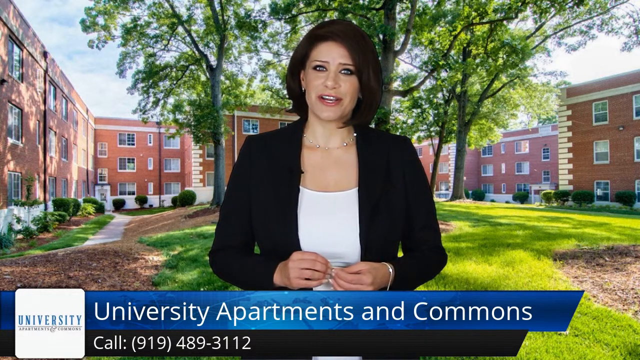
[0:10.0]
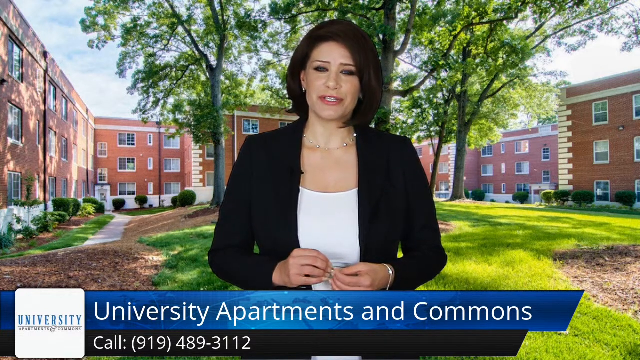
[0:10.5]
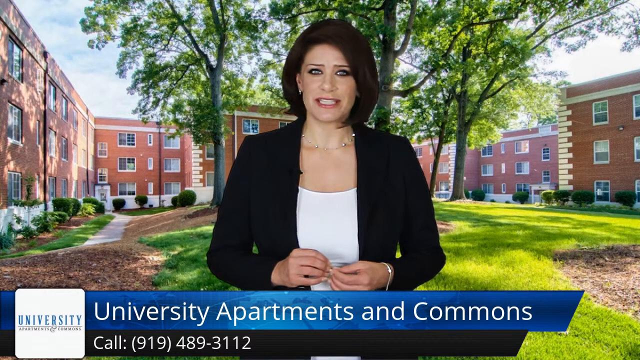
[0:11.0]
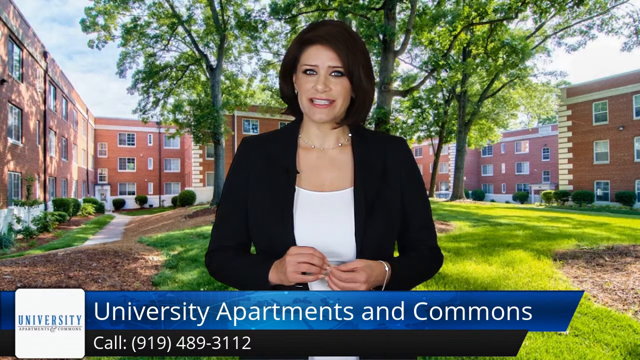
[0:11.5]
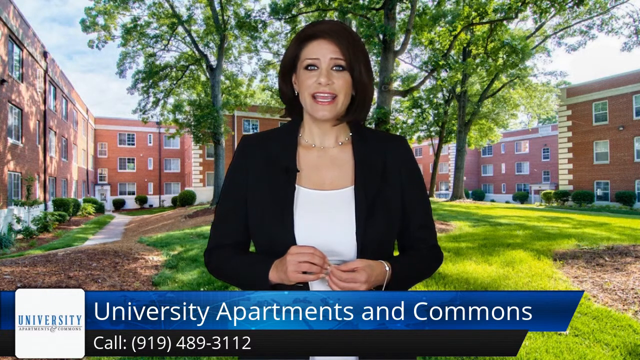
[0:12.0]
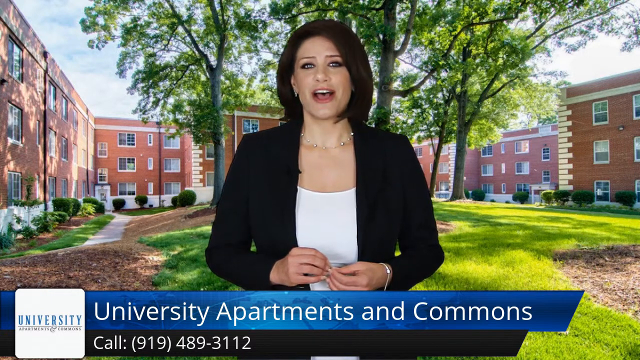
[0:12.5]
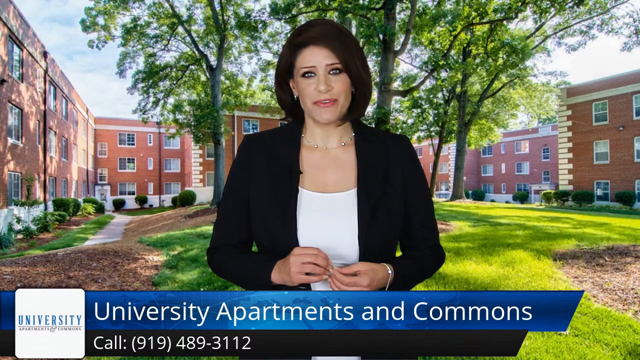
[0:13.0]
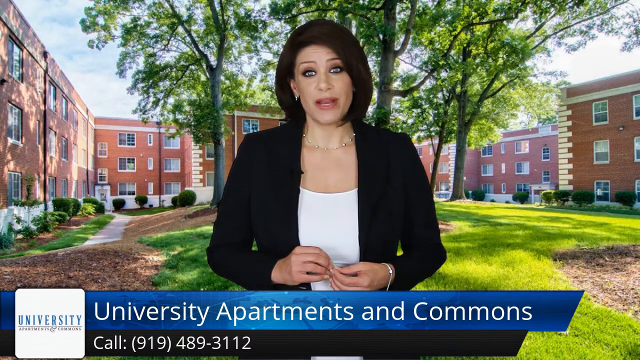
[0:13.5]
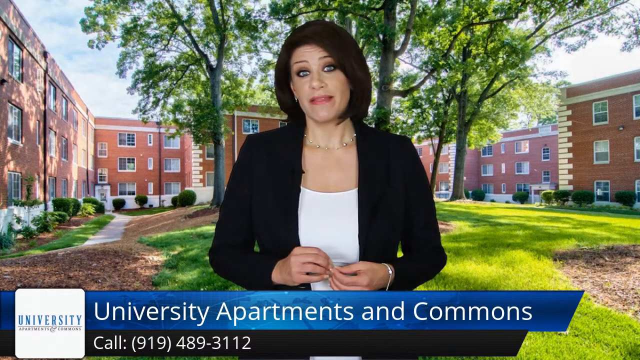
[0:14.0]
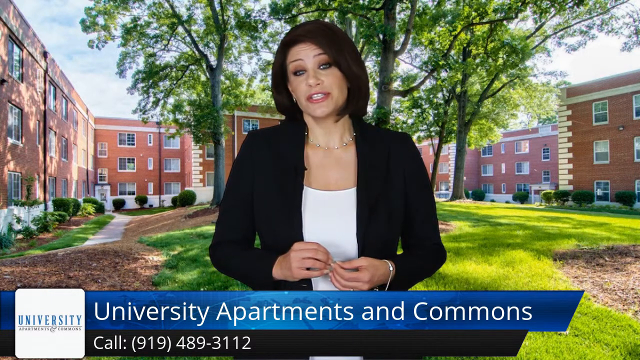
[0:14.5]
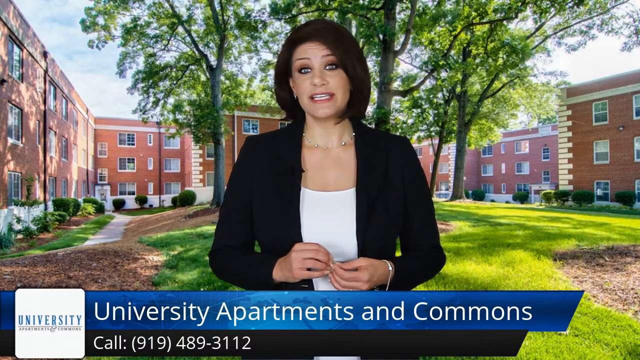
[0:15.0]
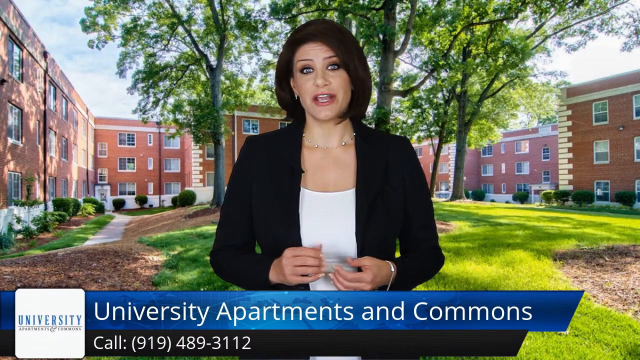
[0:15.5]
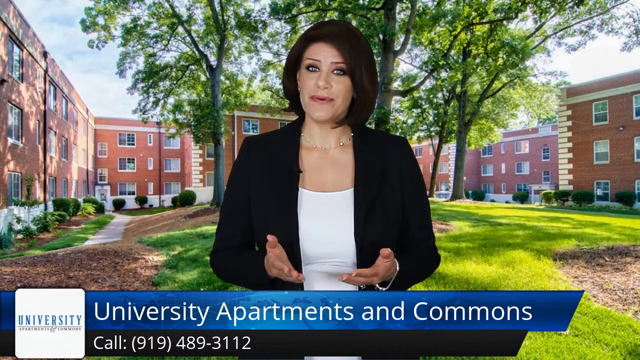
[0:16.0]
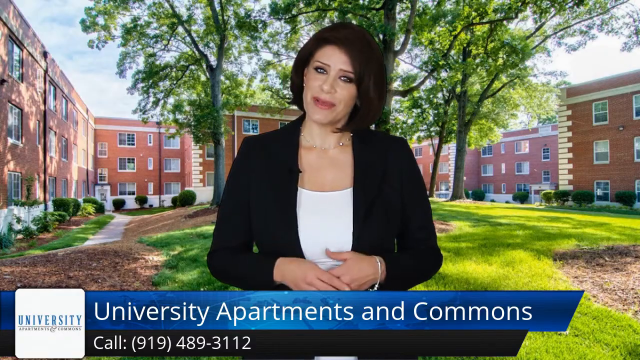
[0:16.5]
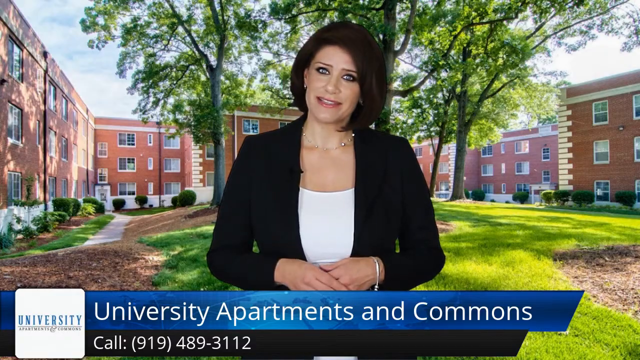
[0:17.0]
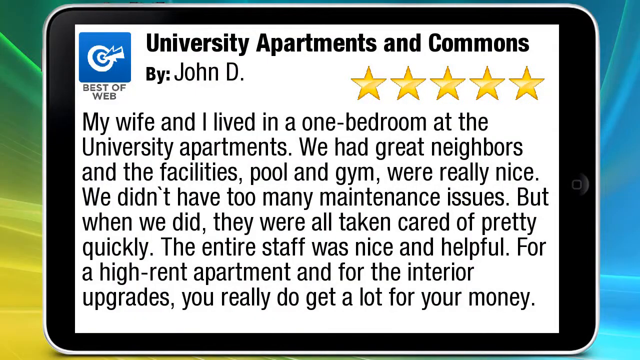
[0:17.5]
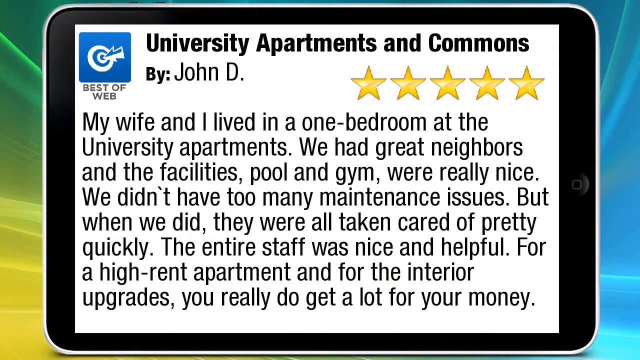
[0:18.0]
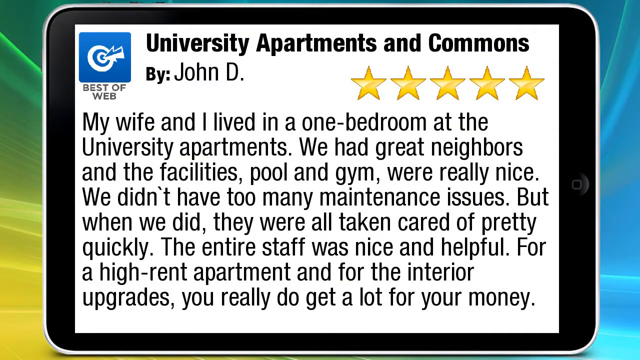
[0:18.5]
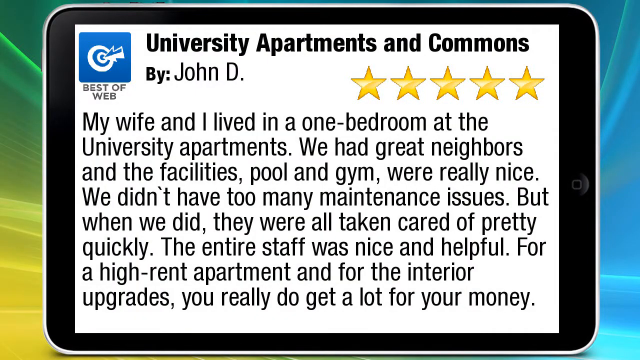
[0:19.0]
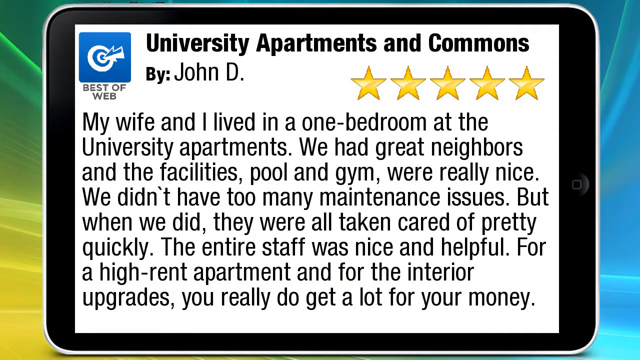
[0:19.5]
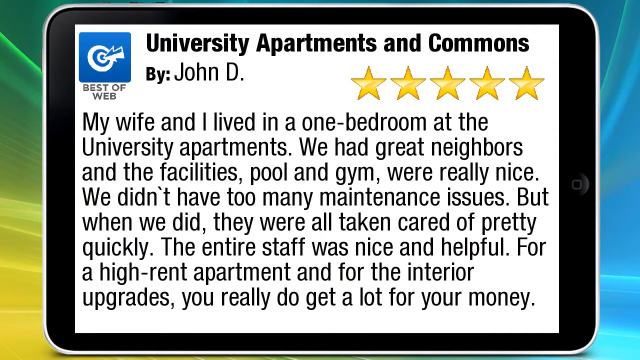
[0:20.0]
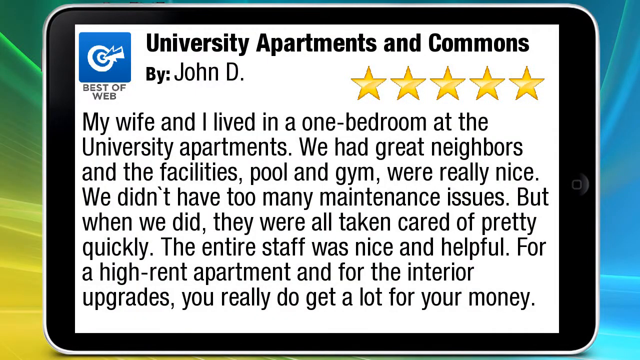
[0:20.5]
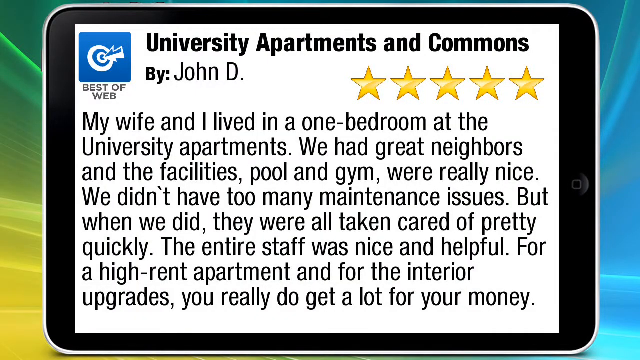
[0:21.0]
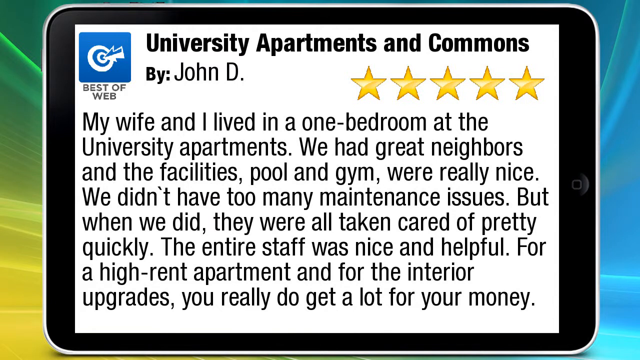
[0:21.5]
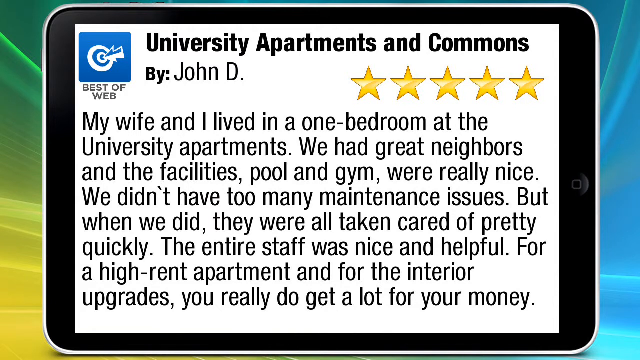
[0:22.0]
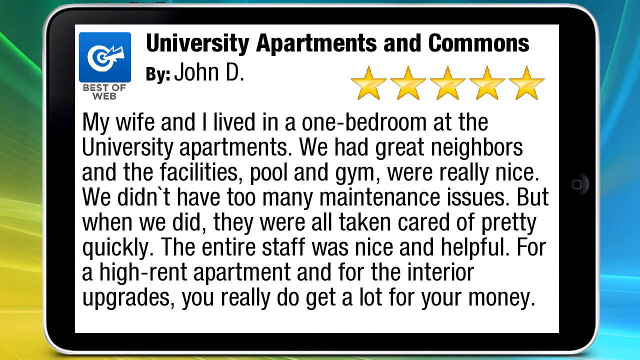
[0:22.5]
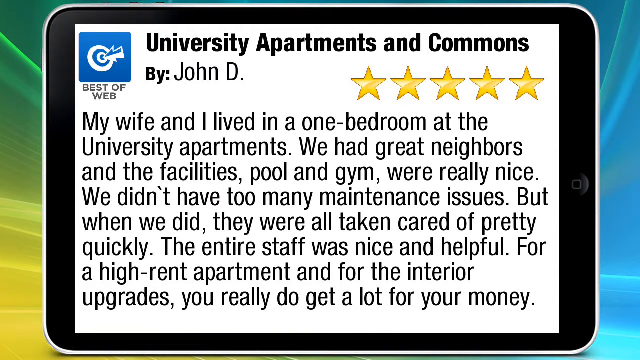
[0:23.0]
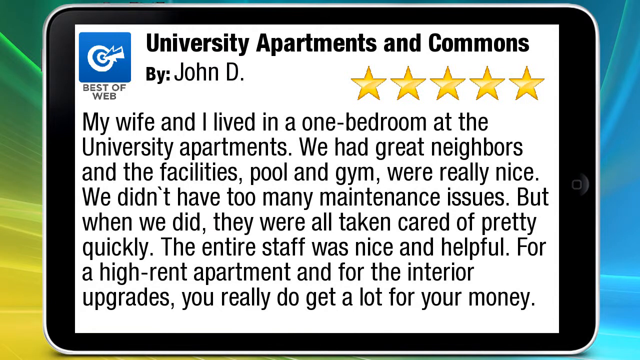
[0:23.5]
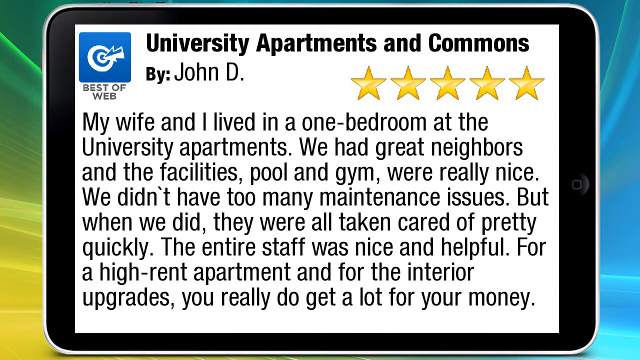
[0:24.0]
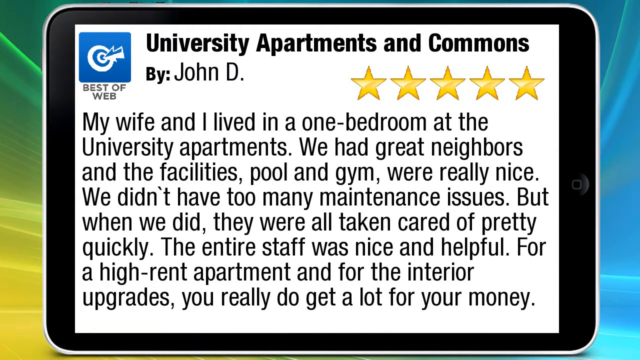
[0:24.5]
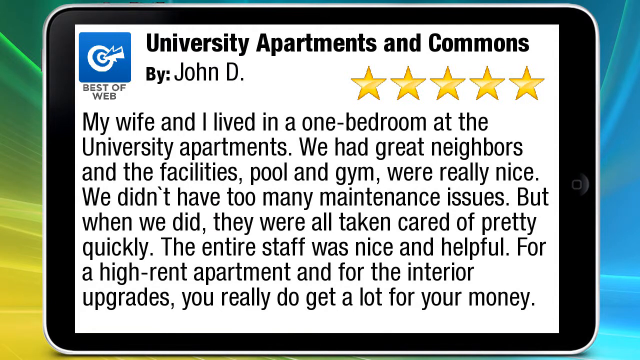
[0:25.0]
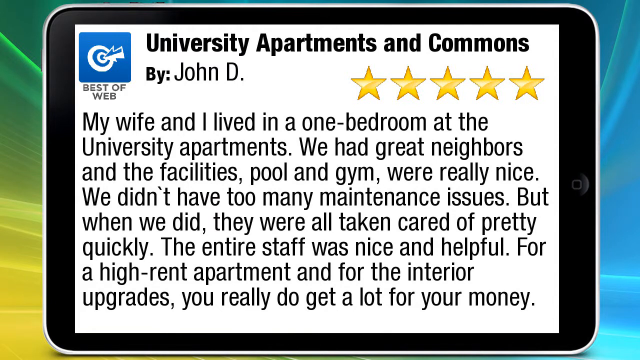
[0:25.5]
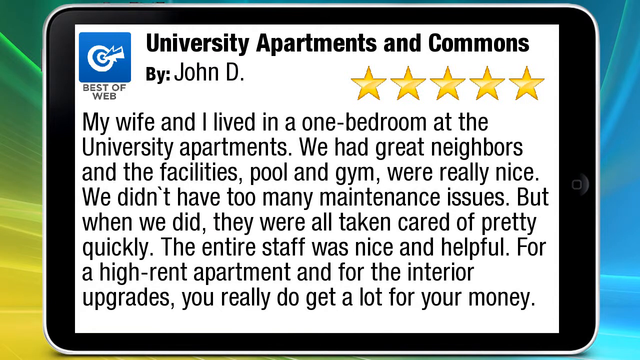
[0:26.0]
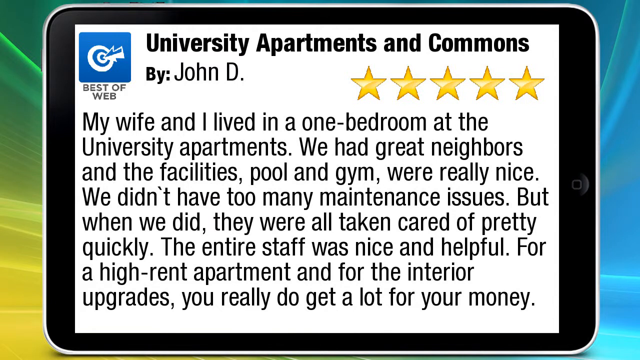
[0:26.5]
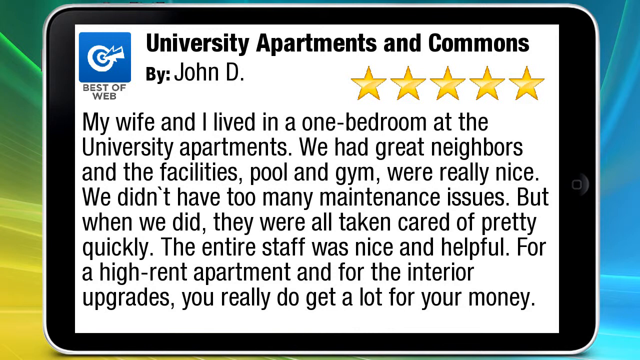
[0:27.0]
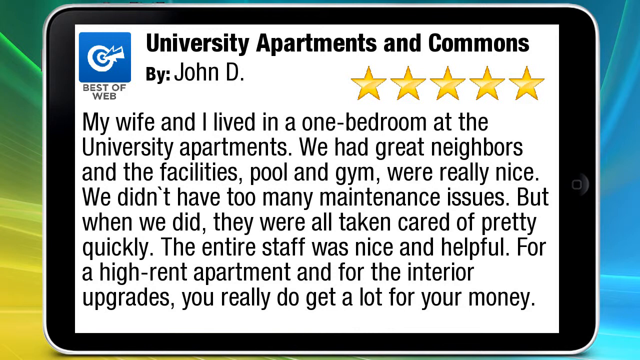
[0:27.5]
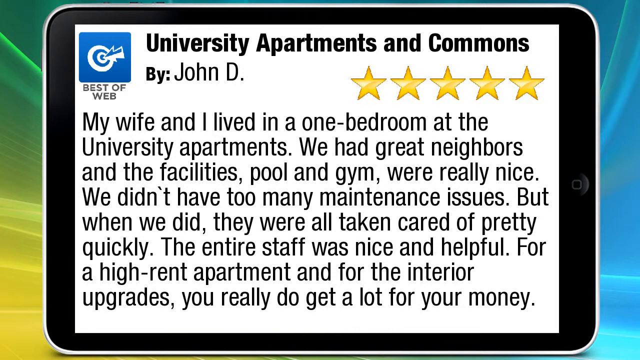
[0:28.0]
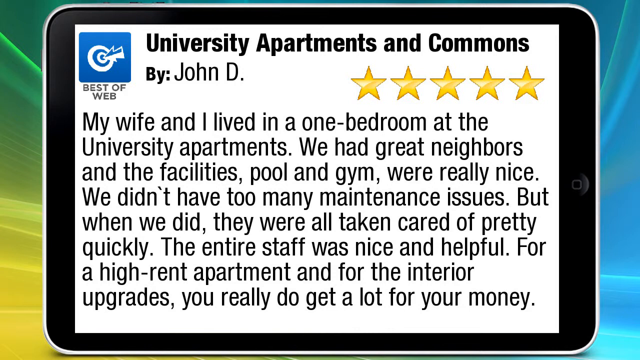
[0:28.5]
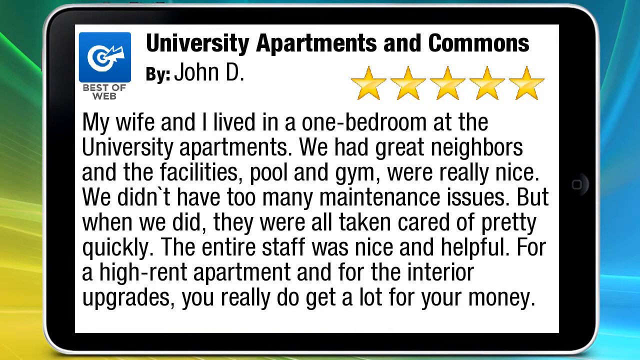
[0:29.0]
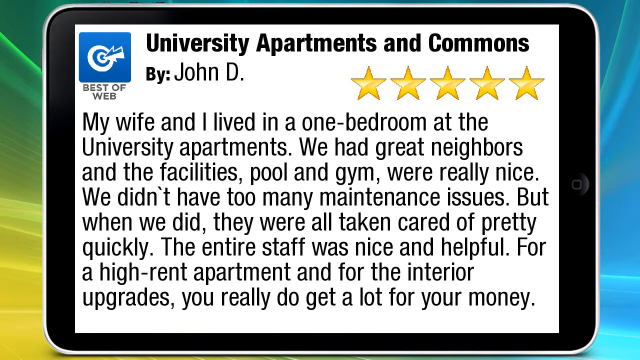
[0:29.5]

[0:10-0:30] The five golden stars and the white background with the University Apartments and Commons name open the sequence, followed by the lady with short hair and a number at the bottom that viewers can call. A five-star customer review then appears, which reads: "my wife and I lived in a one-bedroom apartment in the university apartment with great neighbours and facilities. Pool and gym were really nice." The review goes on to say that the few issues they had were taken care of quickly, and that "The entire staff was nice and helpful. You really do get a lot for your money."